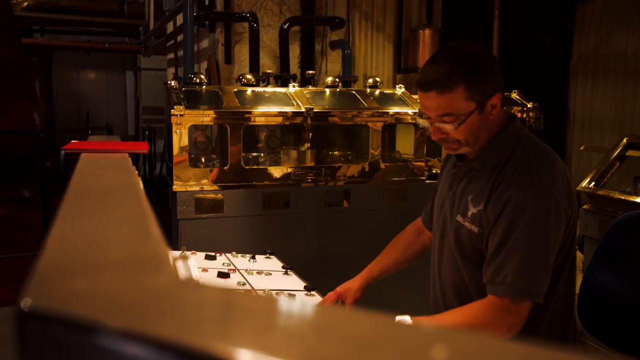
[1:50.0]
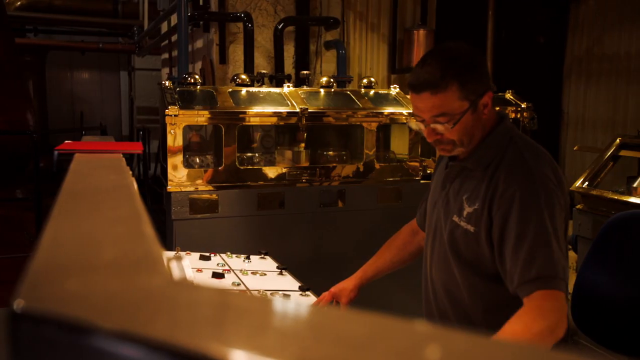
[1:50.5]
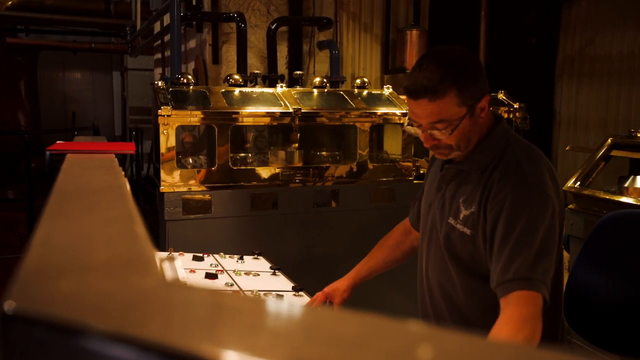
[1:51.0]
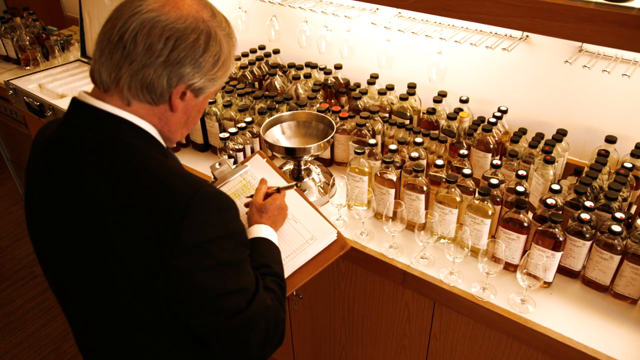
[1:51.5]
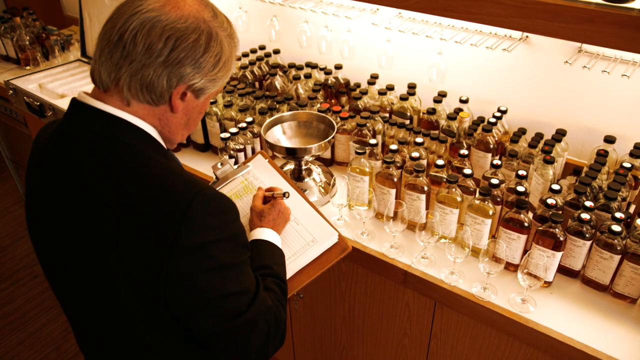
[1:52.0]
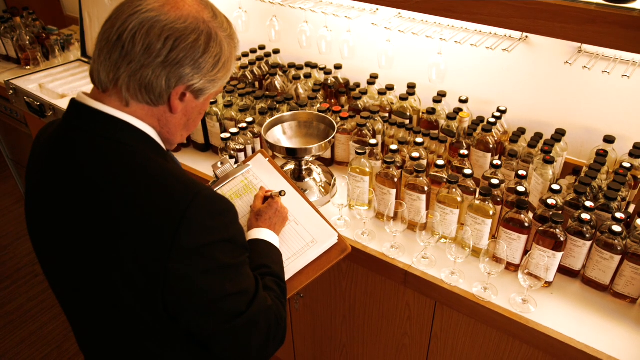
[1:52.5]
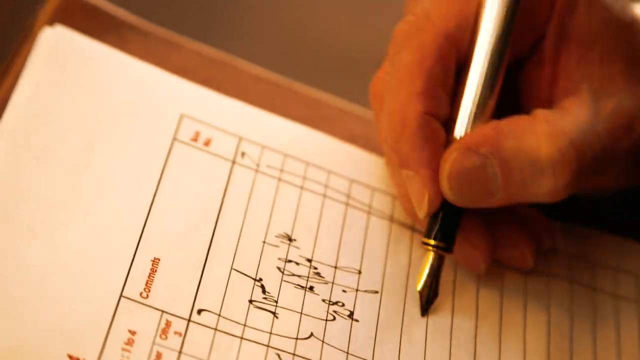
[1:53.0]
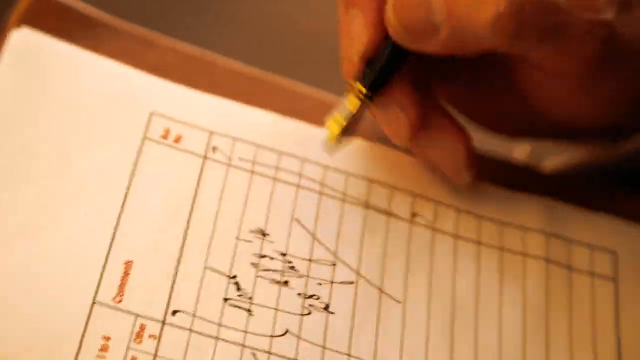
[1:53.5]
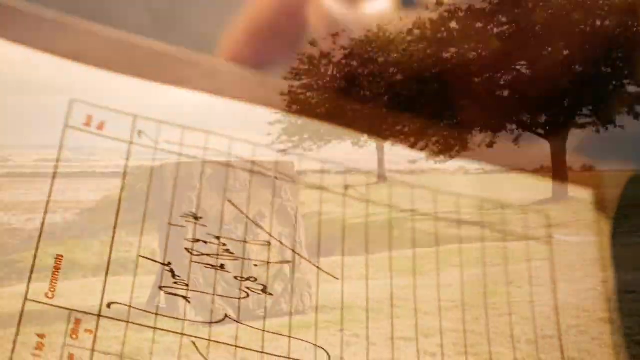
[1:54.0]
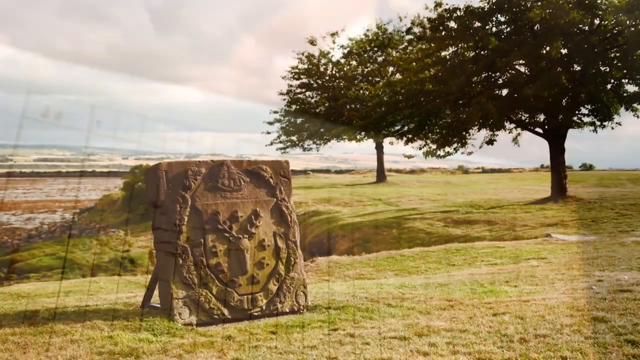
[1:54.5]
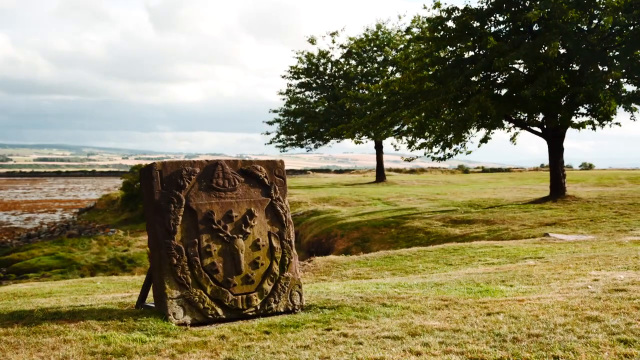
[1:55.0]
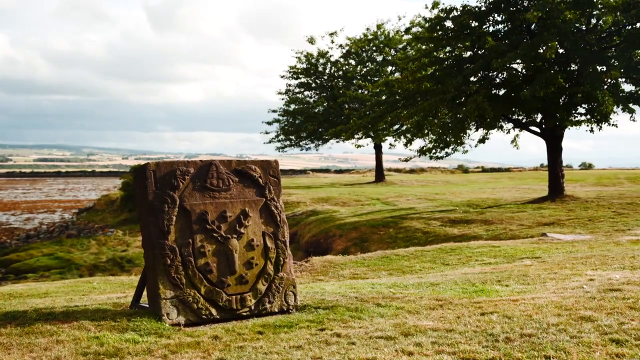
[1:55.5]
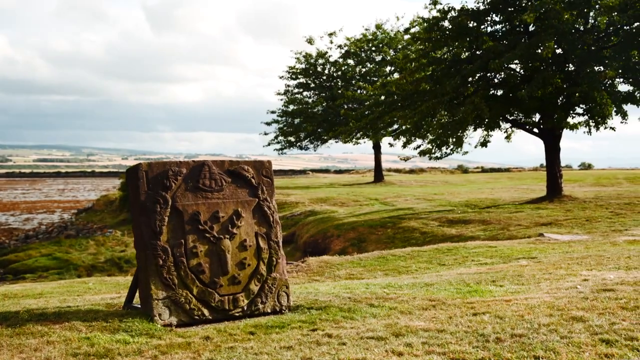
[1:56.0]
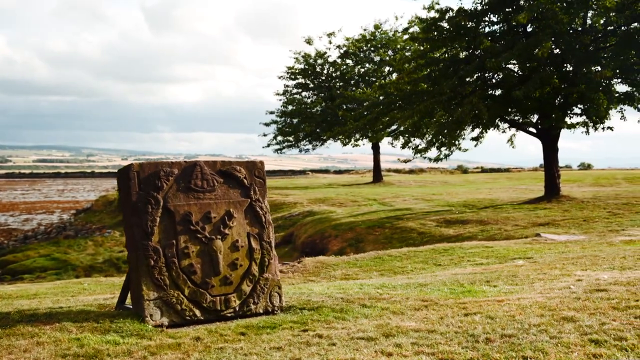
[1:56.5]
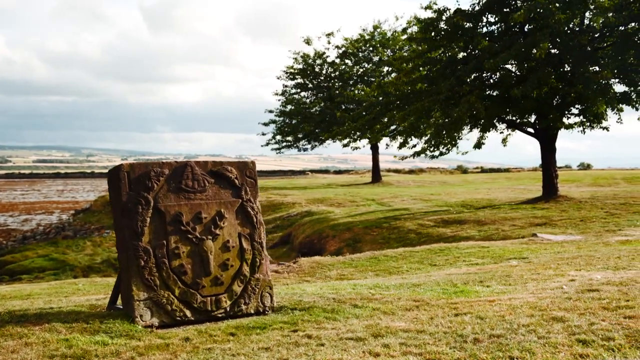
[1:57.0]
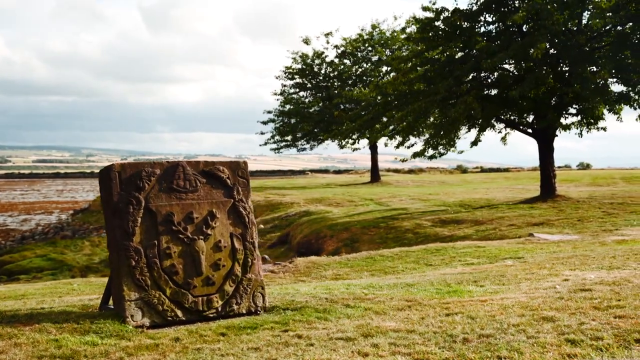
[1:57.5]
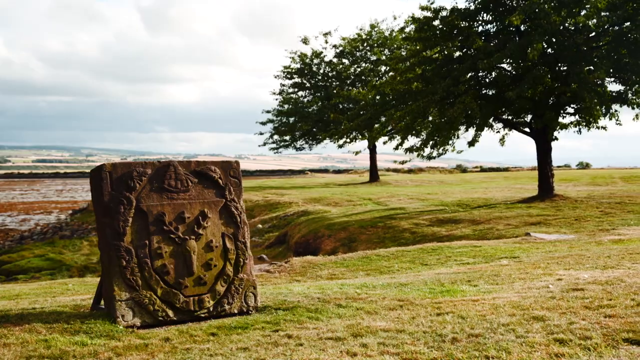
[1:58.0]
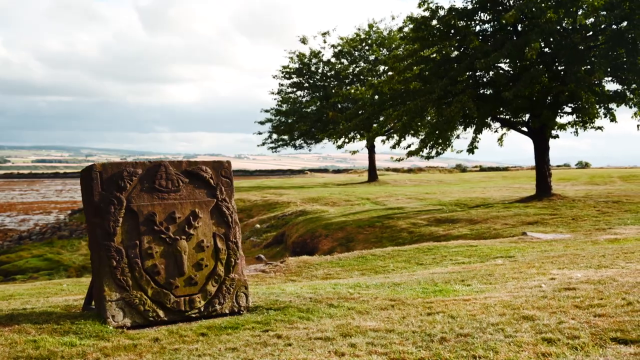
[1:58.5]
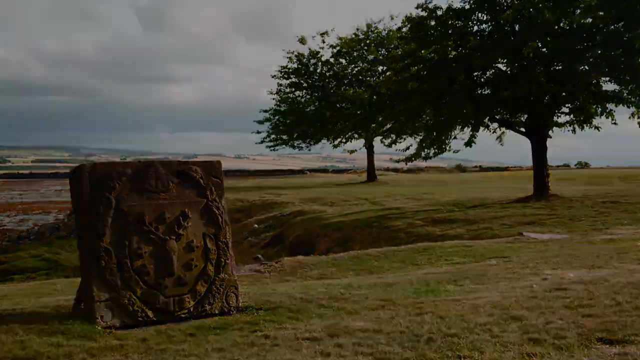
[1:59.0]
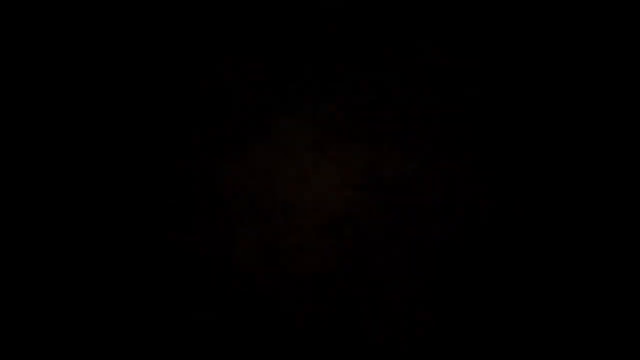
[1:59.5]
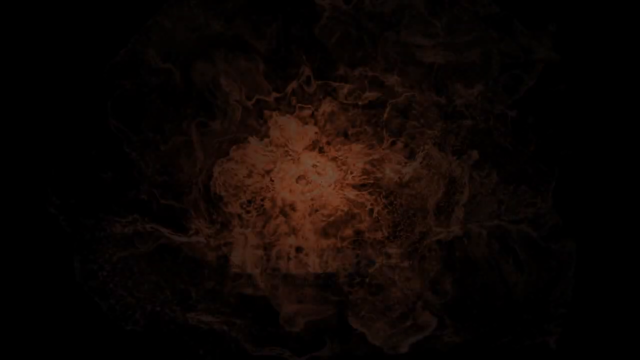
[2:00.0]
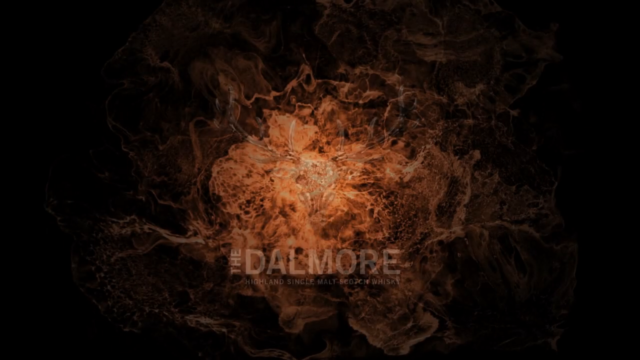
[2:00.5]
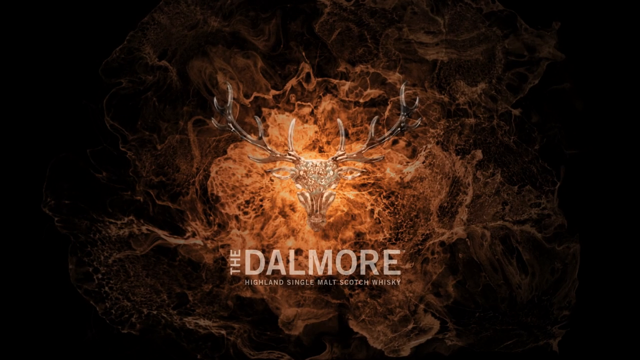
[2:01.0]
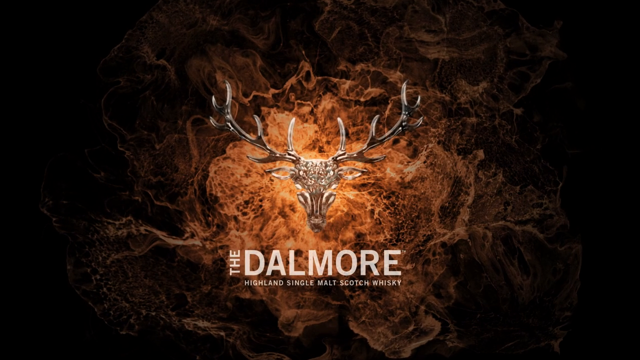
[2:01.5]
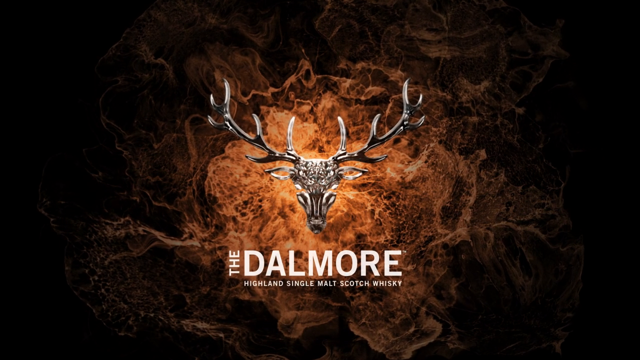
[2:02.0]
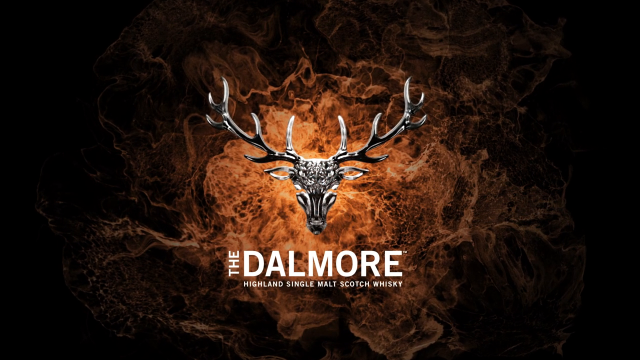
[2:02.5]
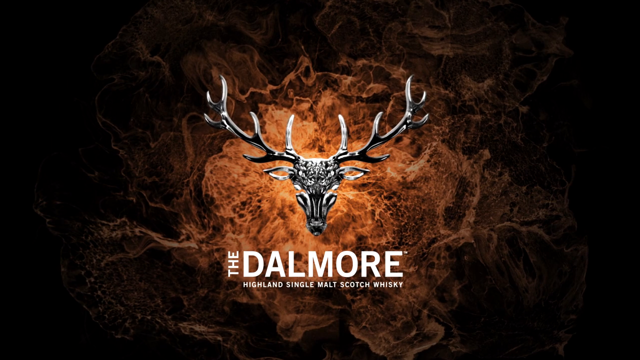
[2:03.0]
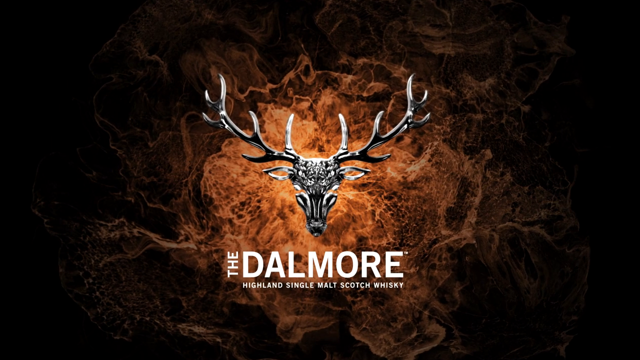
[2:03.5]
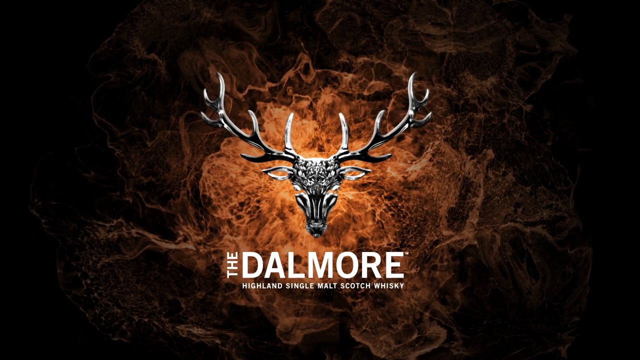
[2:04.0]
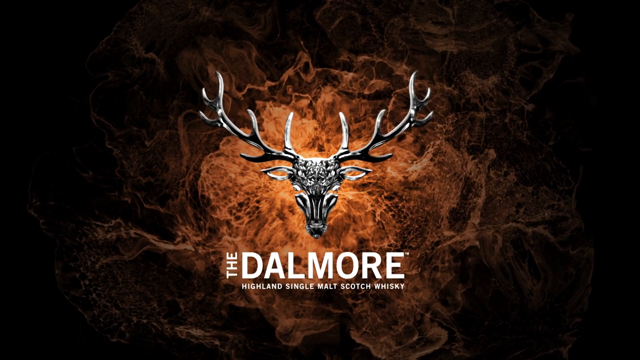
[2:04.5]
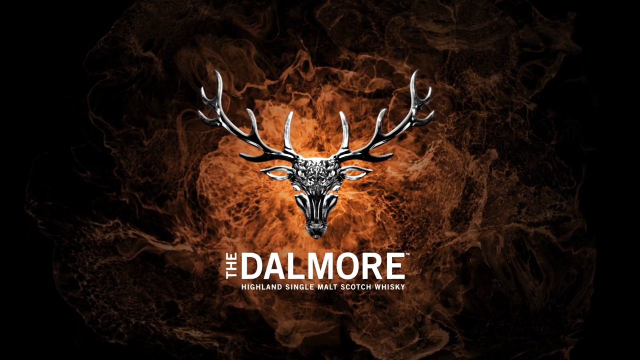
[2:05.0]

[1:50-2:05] The whiskey is the Dalmore, a single malt Scotch whiskey, aged in charred oak barrels and bottled.